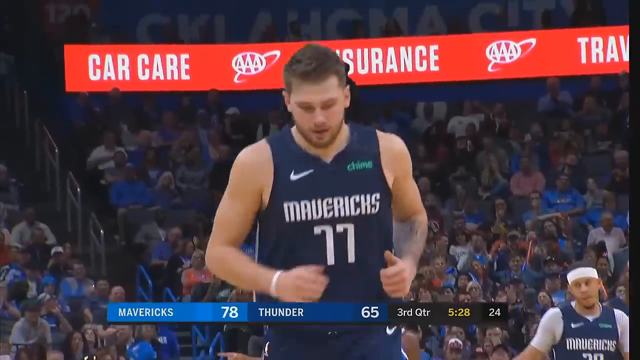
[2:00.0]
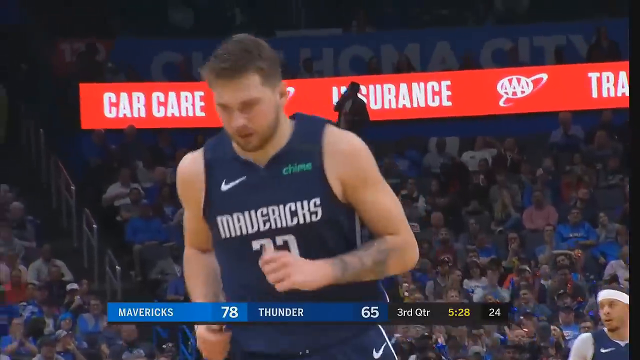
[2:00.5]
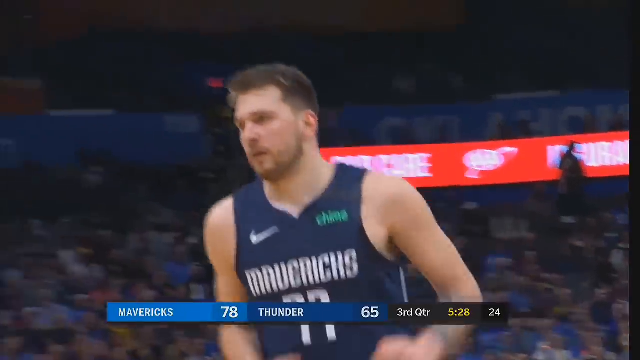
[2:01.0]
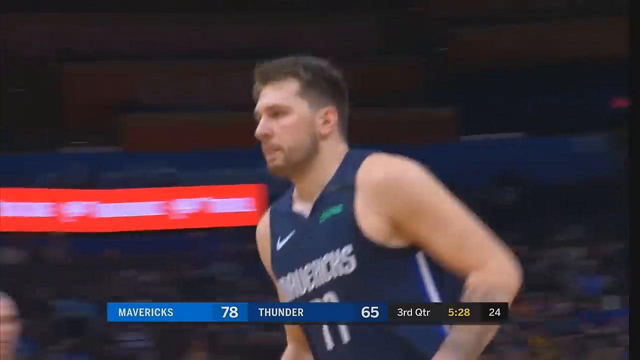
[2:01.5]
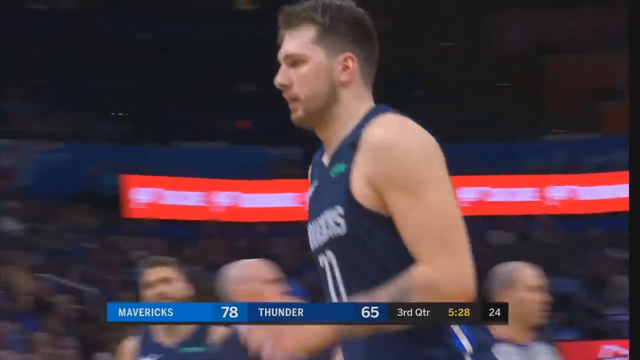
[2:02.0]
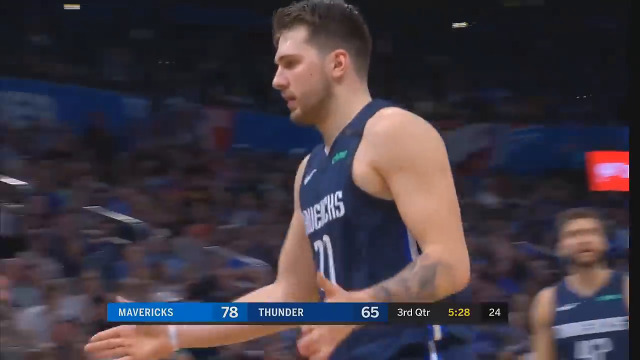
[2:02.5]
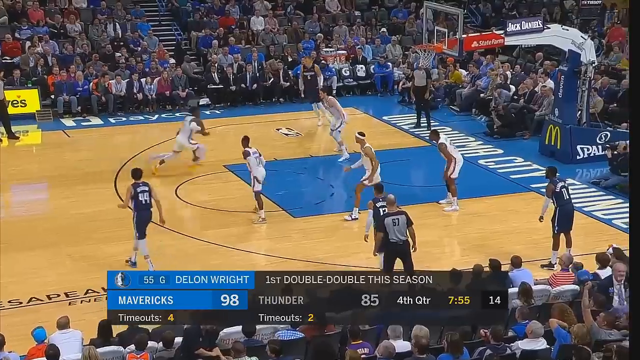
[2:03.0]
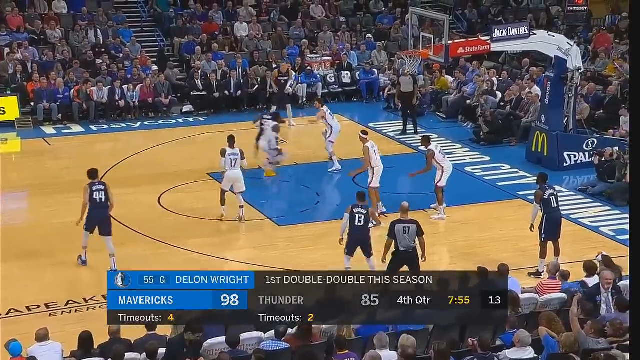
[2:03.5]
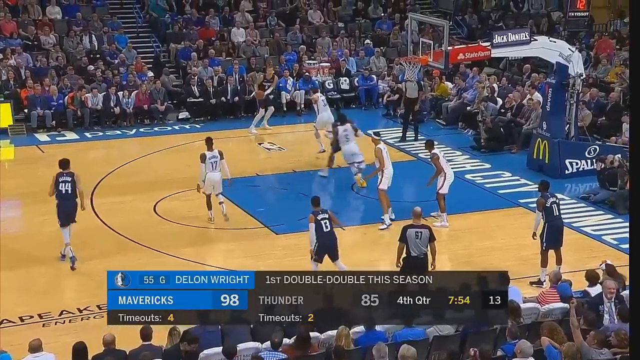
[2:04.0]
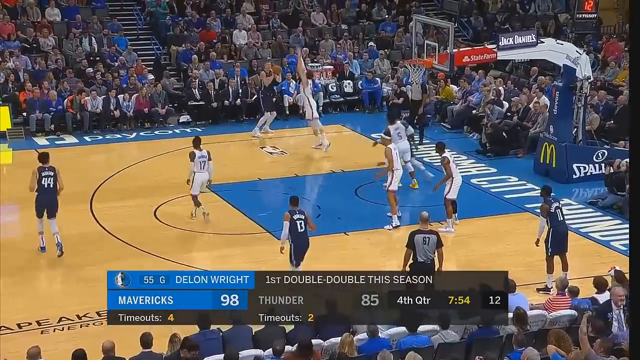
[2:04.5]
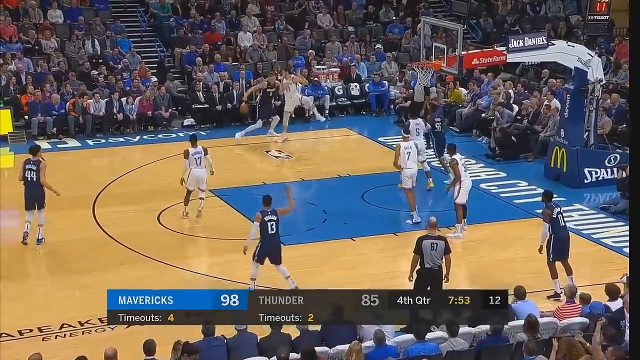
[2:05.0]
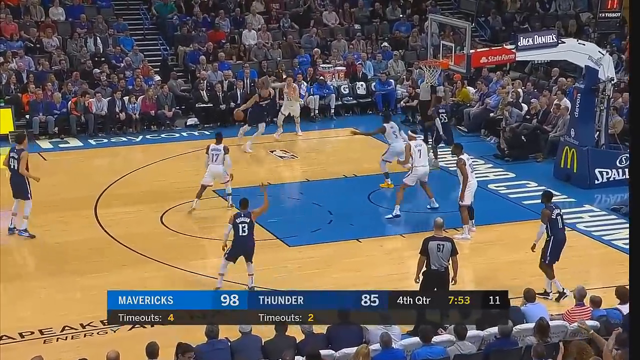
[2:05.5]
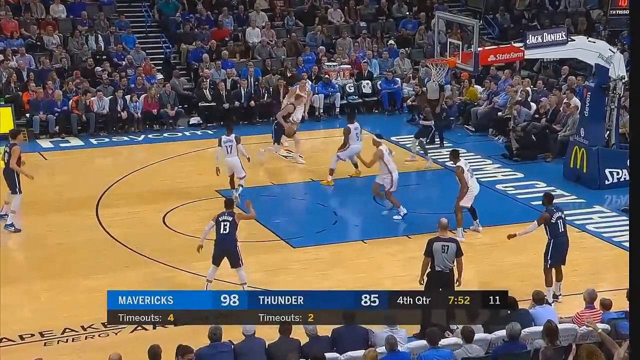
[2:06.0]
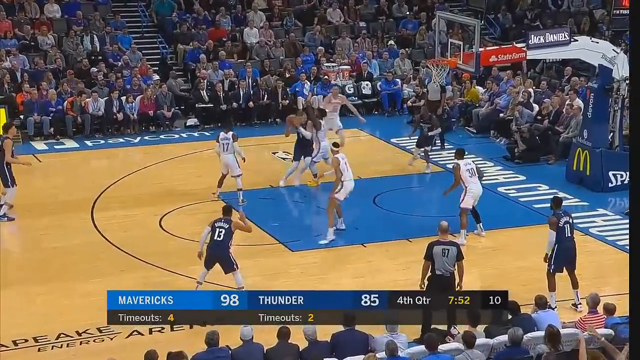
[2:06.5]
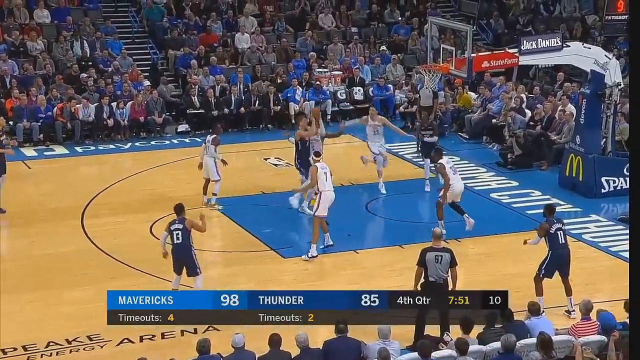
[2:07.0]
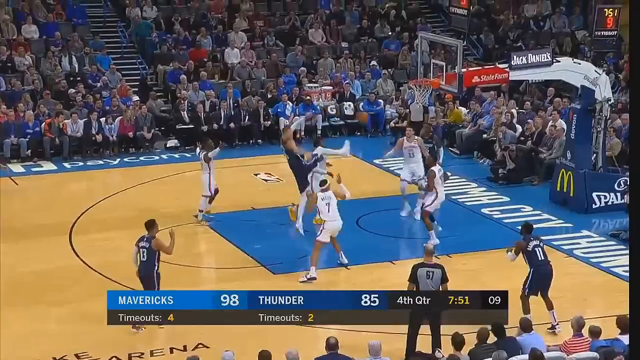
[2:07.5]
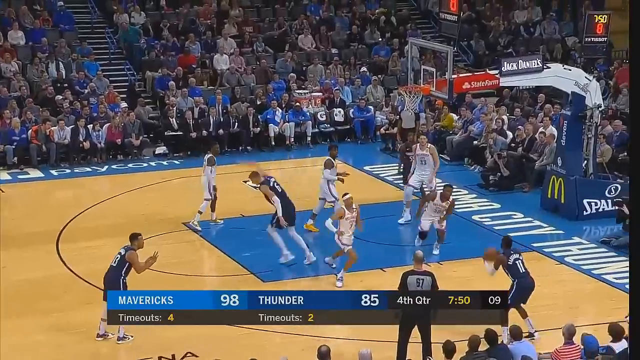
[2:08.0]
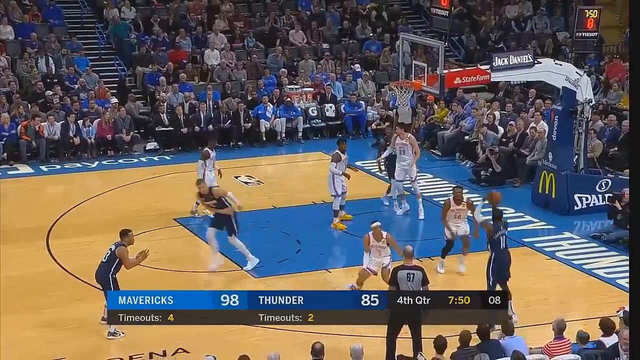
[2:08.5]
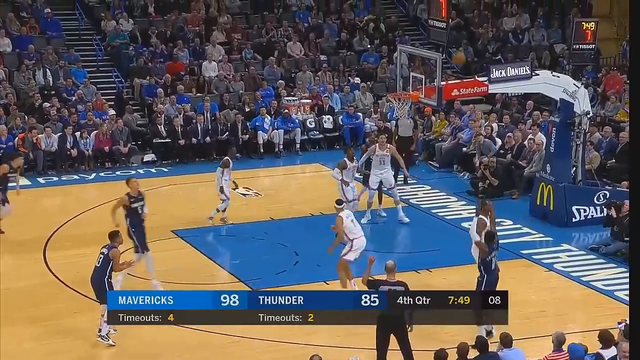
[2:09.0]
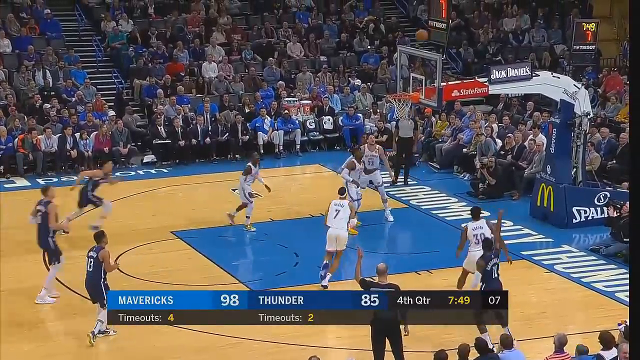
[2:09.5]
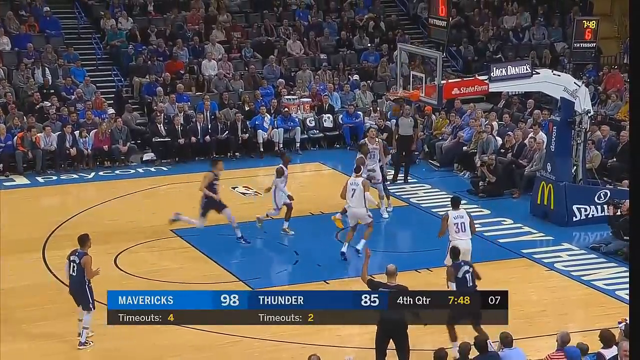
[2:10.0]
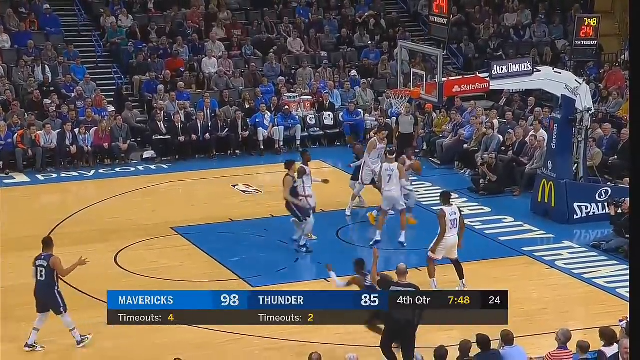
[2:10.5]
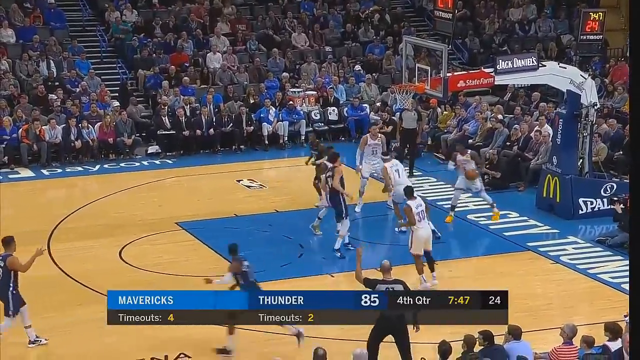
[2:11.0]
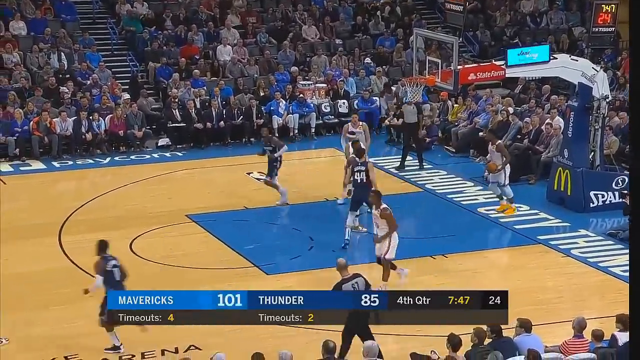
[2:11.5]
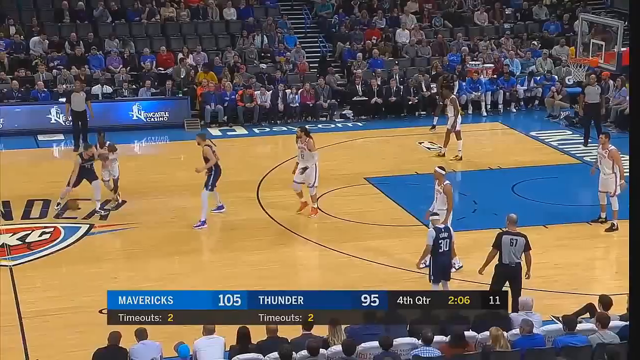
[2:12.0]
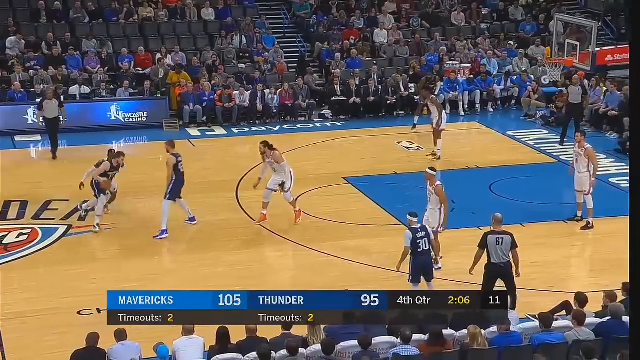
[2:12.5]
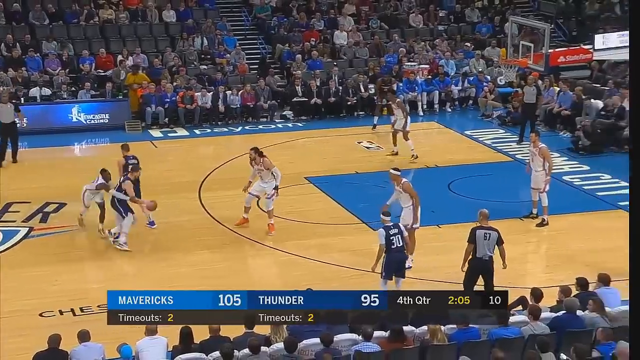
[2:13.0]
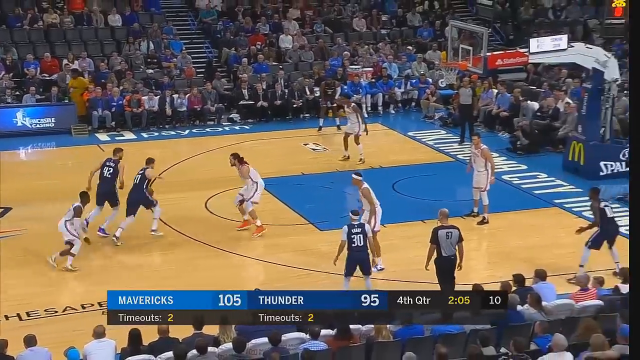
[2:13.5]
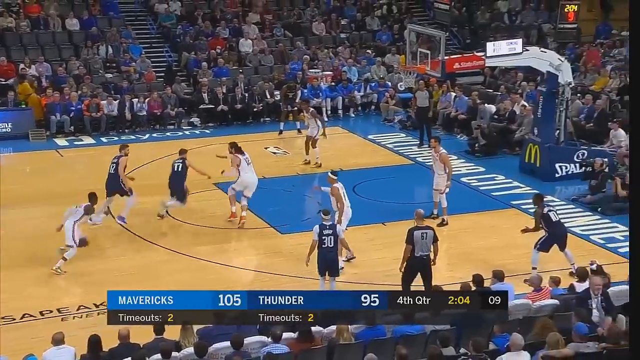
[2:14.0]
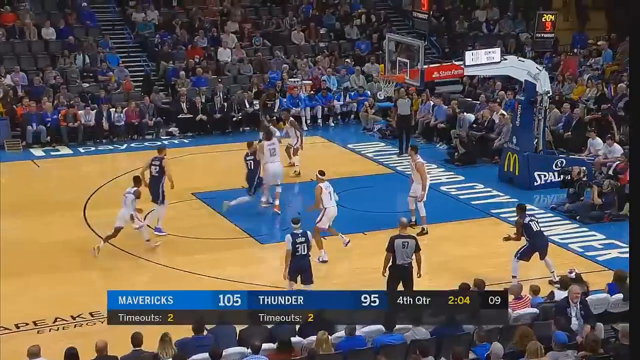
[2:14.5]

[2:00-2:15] Doncic is perhaps running to the sideline; only his upper body is visible, so it is hard to tell. Dallas continues to play, and Doncic is back in the game with another layup. The video goes further ahead in the game with highlights of Doncic scoring; the score is 105 for Dallas and 95 for the Oklahoma City Thunder, with about two minutes left in the fourth quarter. The crowd is still very subdued. Several different Dallas Mavericks players hit baskets: the center dishes the ball off to one player in the corner beyond the three-point line, and he makes the play. Doncic gets by his guard and scores as well.